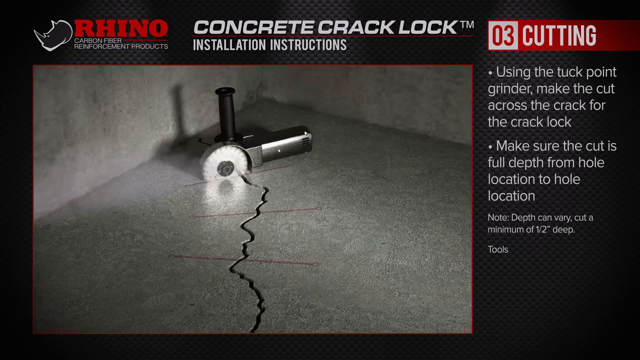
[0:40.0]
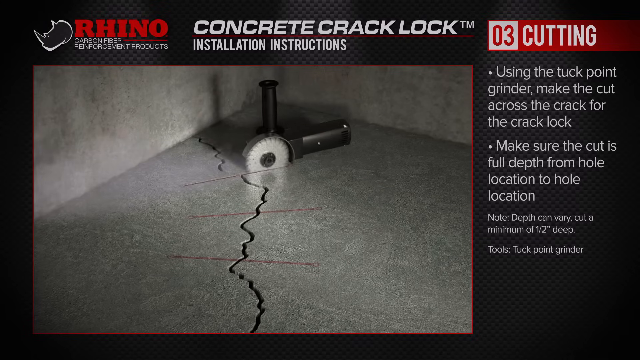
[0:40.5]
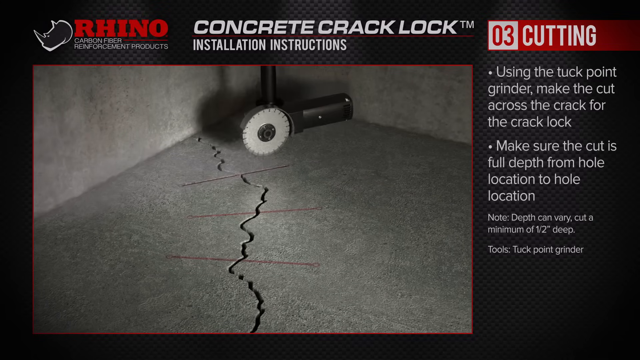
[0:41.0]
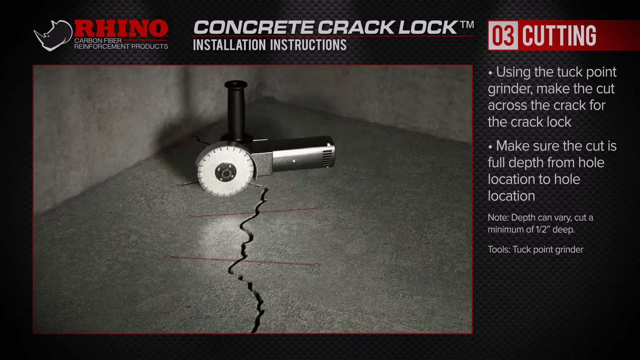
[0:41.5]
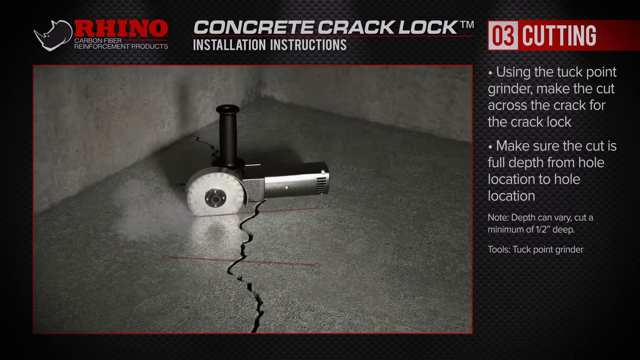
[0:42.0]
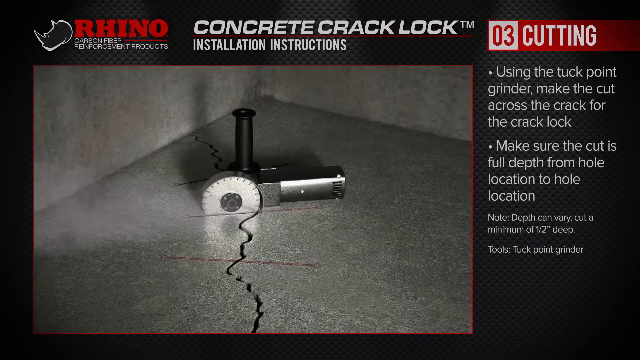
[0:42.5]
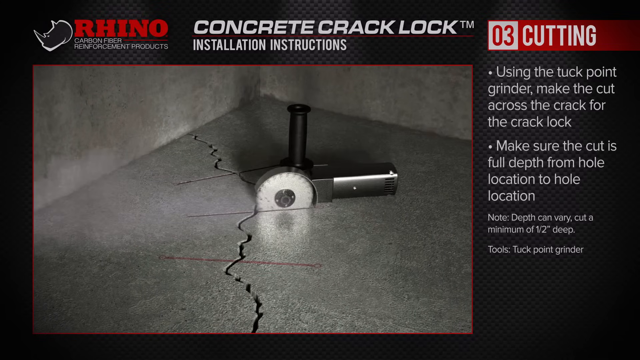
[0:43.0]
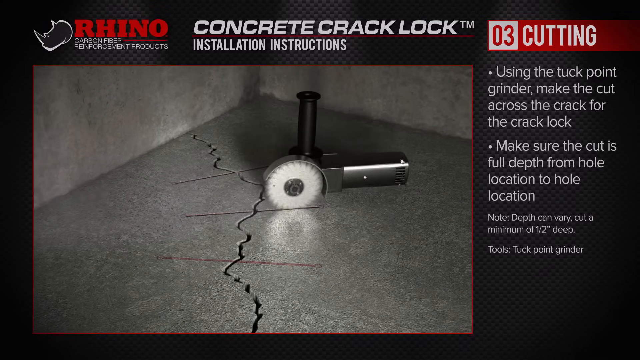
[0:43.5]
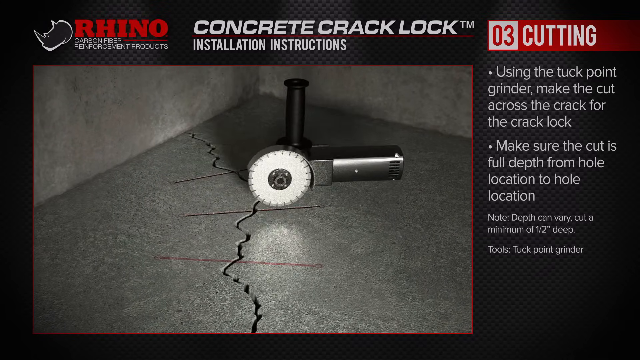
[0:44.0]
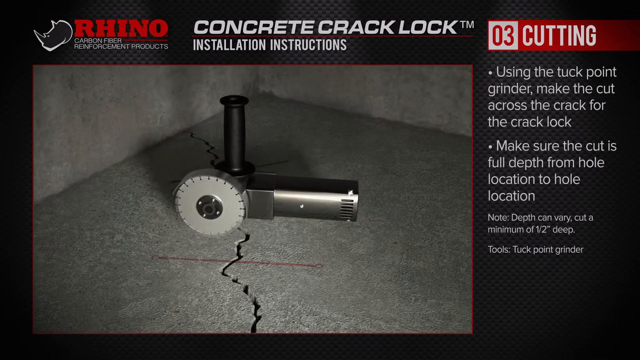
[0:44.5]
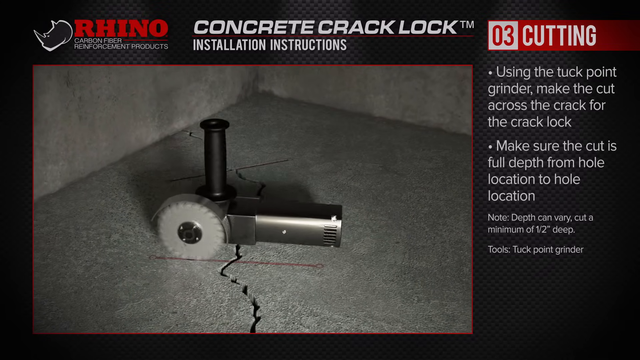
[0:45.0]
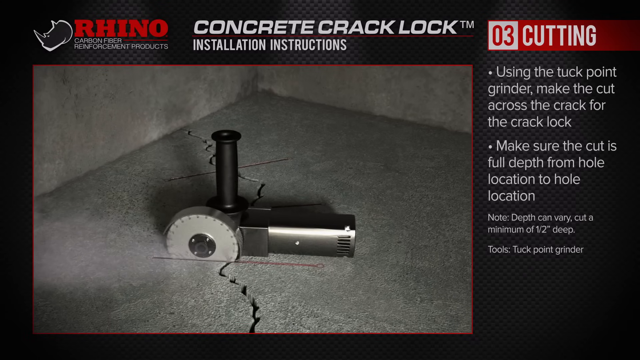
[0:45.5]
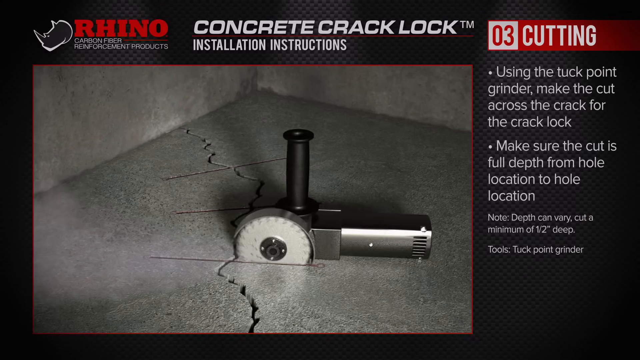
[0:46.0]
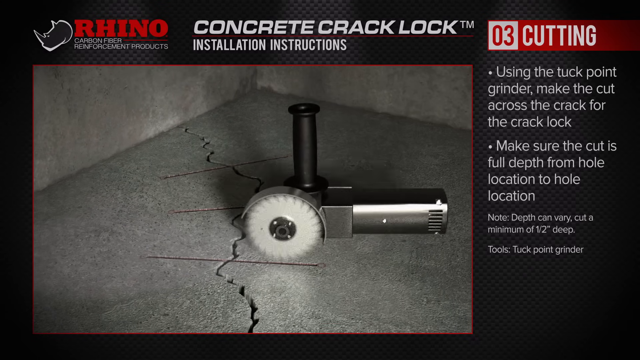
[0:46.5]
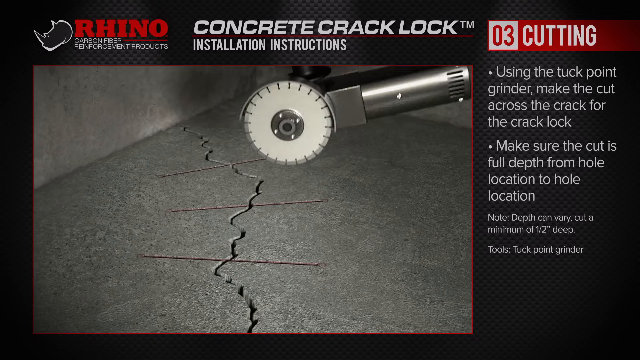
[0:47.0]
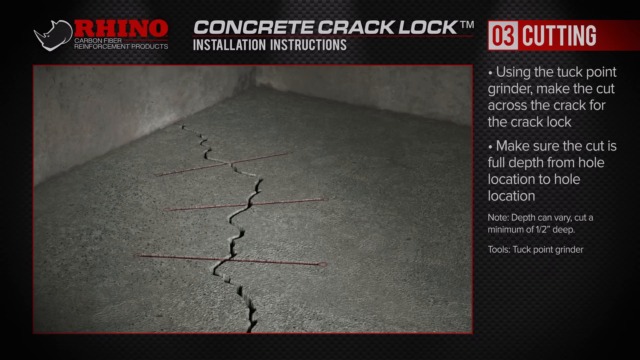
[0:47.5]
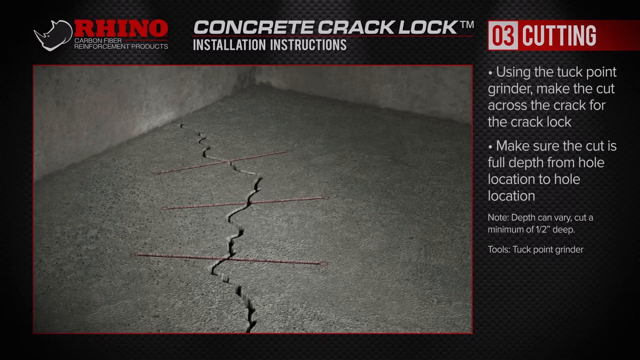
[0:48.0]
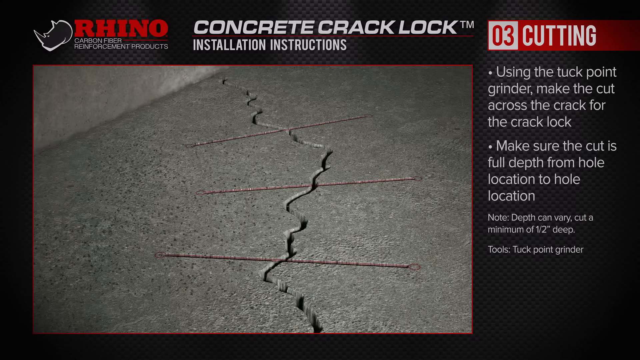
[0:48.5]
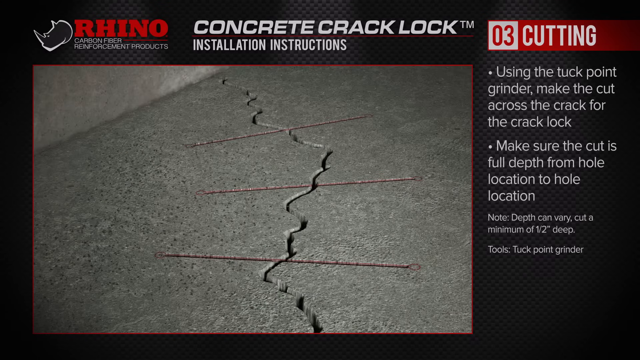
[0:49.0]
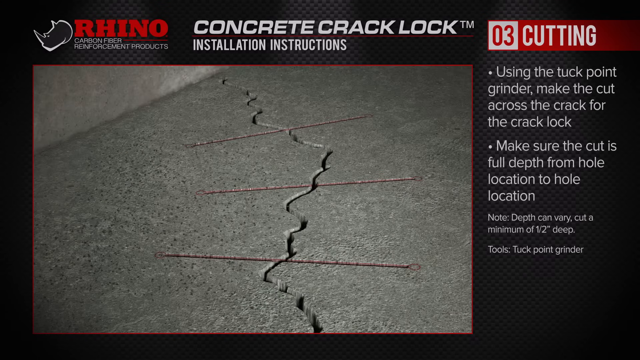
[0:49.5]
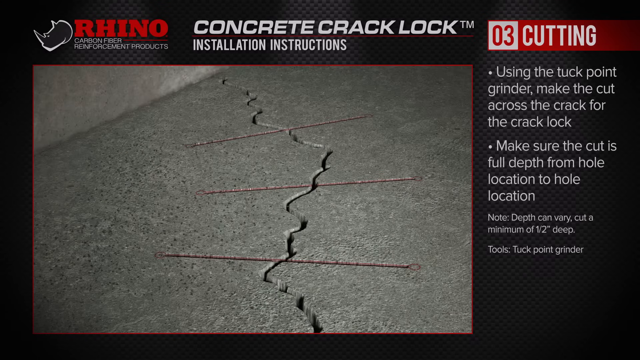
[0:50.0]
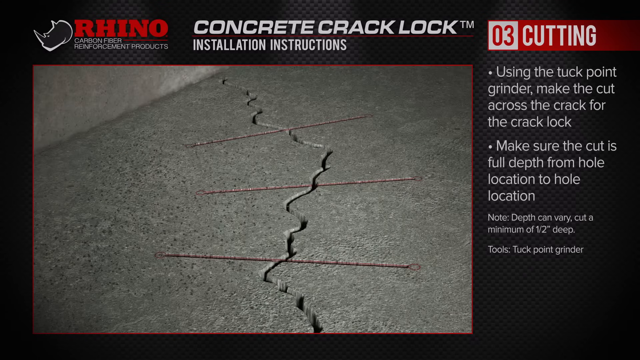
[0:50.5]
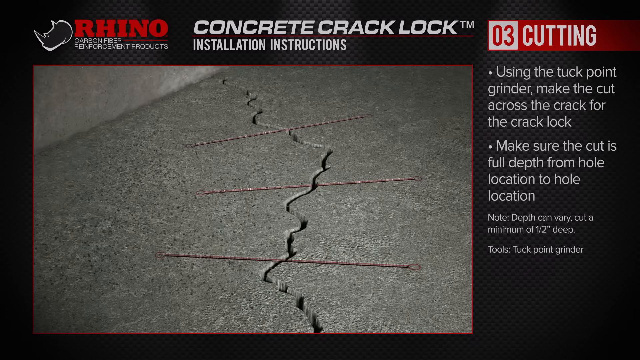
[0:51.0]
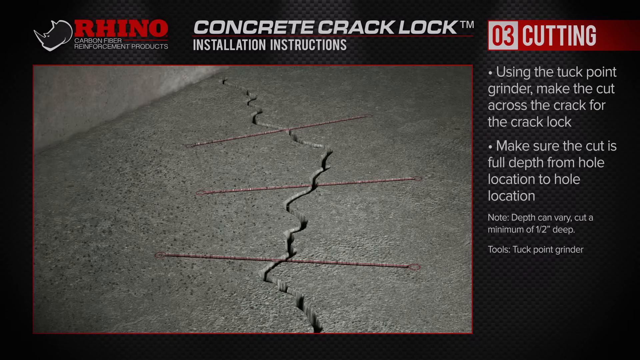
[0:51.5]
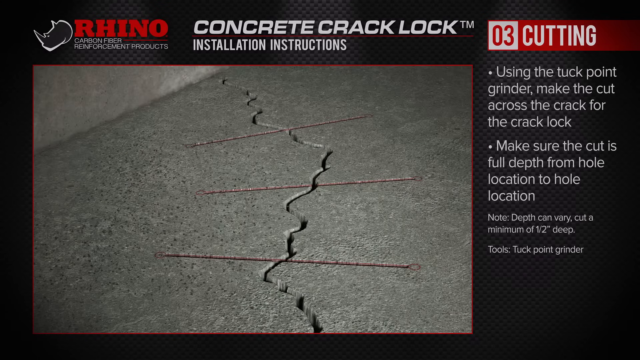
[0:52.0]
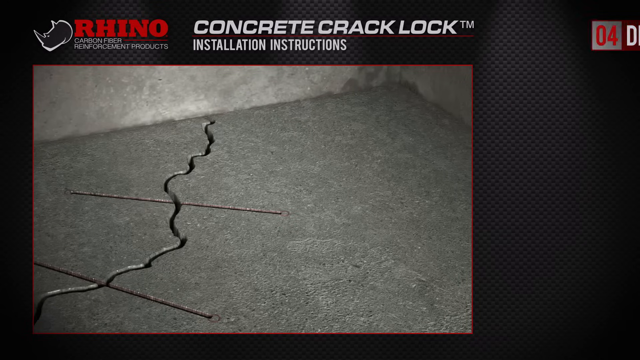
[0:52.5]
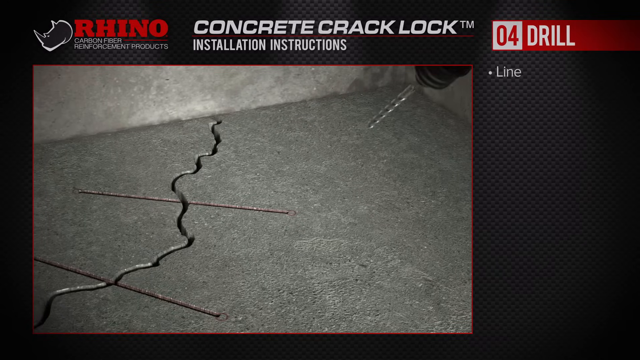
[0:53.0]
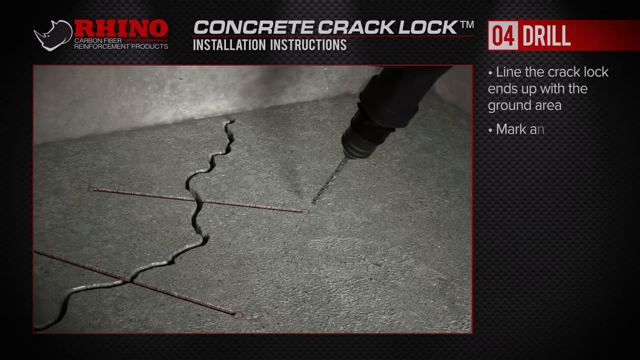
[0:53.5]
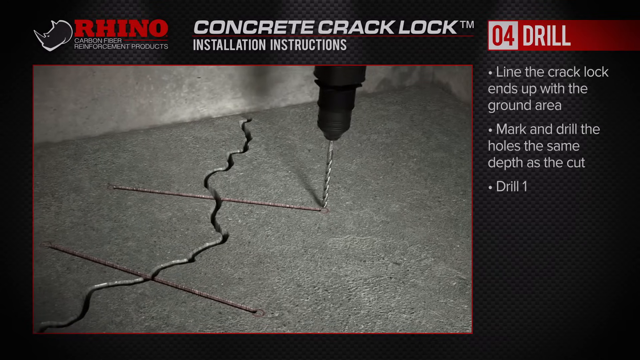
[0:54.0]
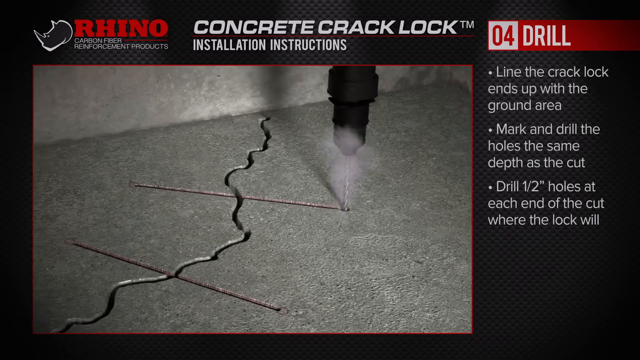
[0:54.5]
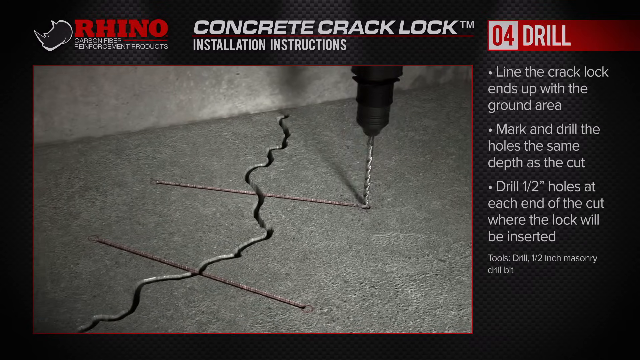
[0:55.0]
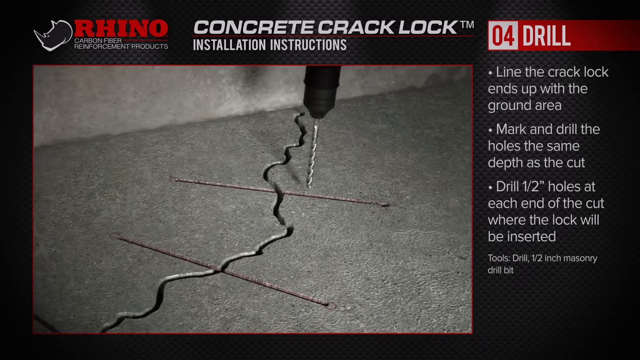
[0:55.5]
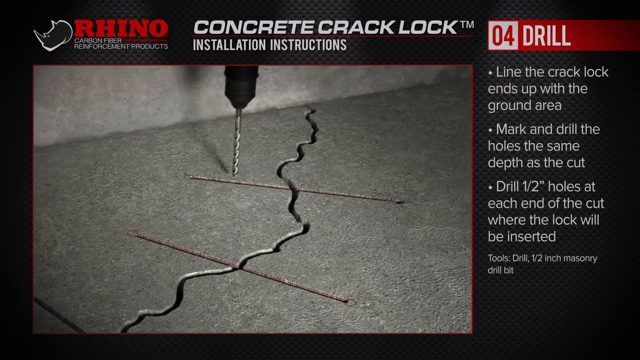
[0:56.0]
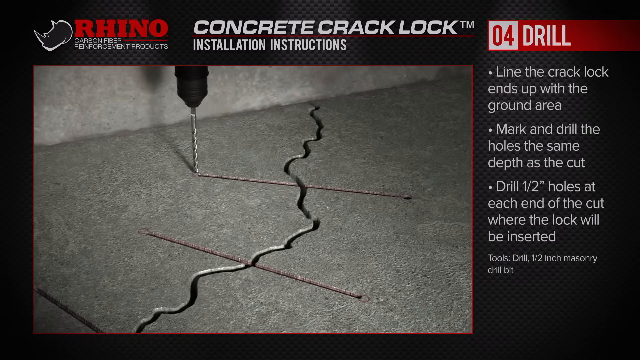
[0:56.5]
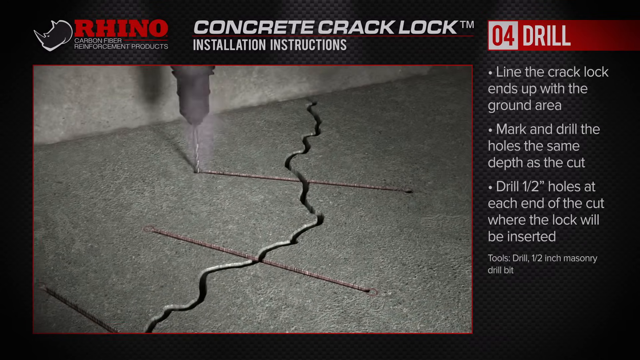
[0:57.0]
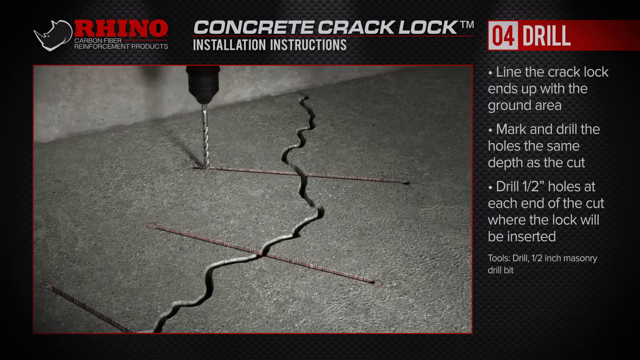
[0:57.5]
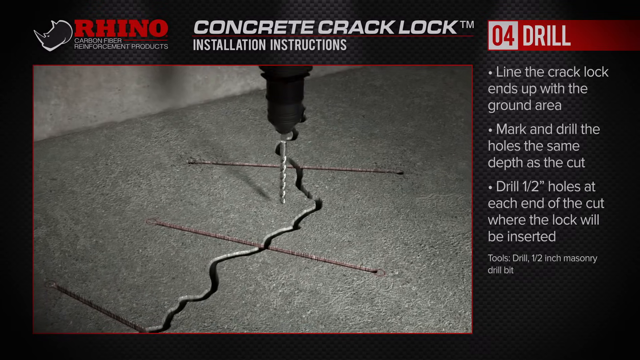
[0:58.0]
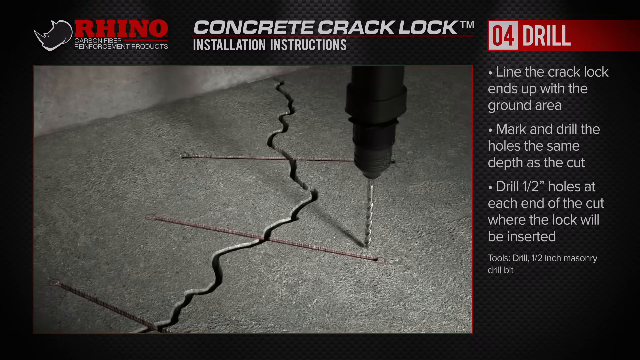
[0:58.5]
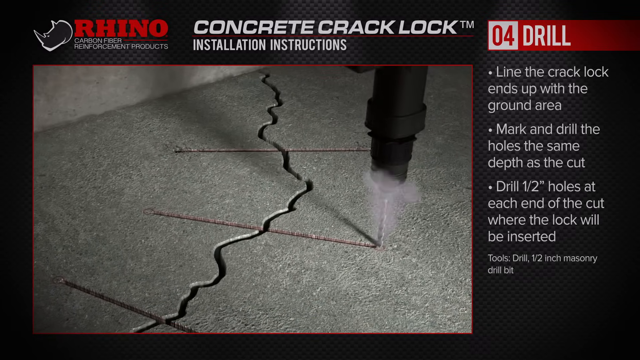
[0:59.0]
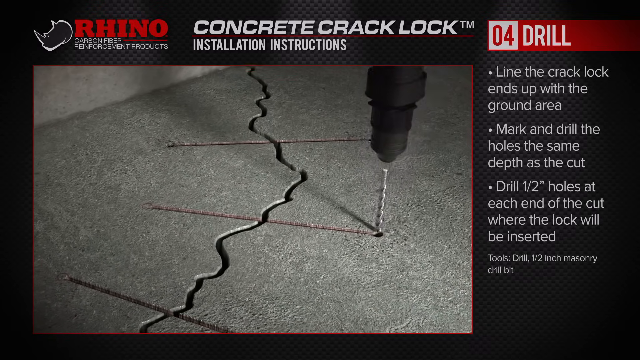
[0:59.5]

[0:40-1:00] The top point grinder cuts through the crack lock points, which are the red lines made on the cracks in the floor. The grinder is metallic with a stainless steel surface and a black handle, and its rolling blade serrates through the floor precisely along the red marked lines. An installation instruction says to "make sure the cut is full depth". Step number four, drill, follows. A black drill machine with a screw at the bottom is screwed on at the crack lock end. The instruction states to line the crack lock end up with the ground area, mark and drill the holes the same depth as the cuts, and drill half-inch holes at the end of the cuts where the lock will be inserted. This is demonstrated as the drill goes through the end of the crack lock.